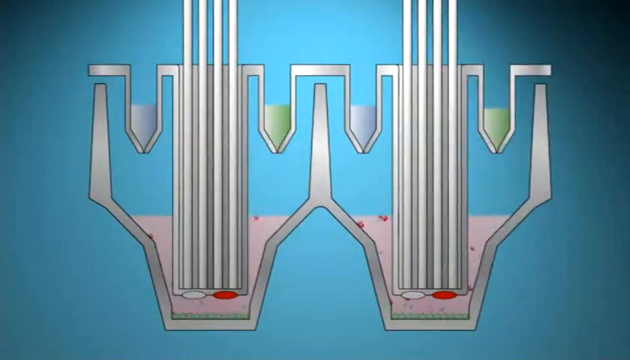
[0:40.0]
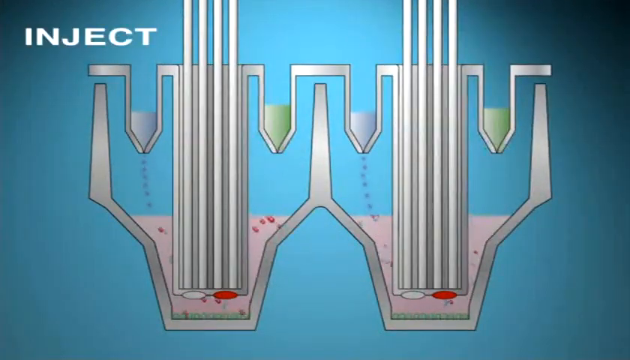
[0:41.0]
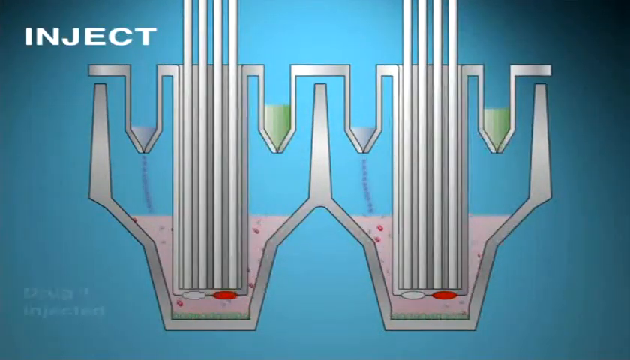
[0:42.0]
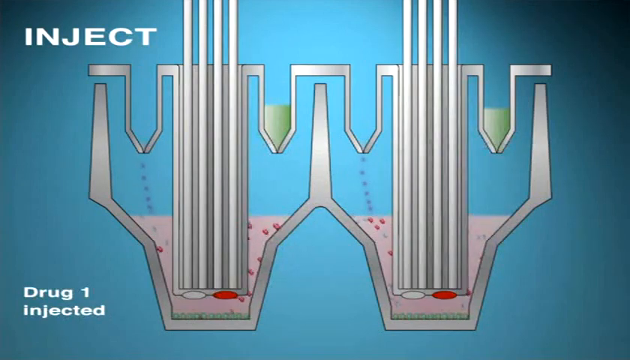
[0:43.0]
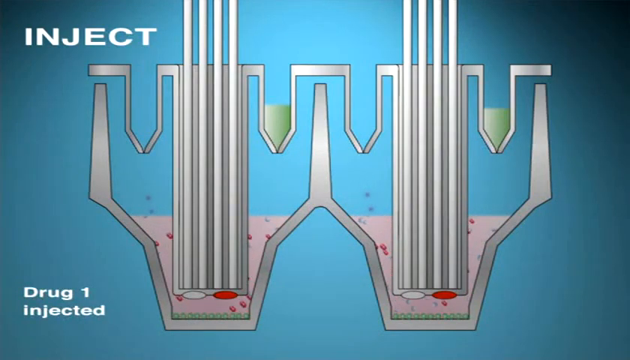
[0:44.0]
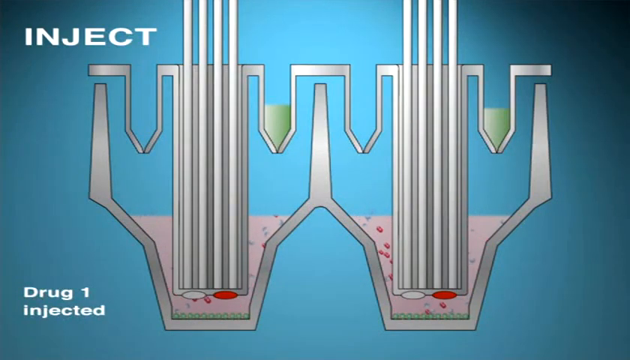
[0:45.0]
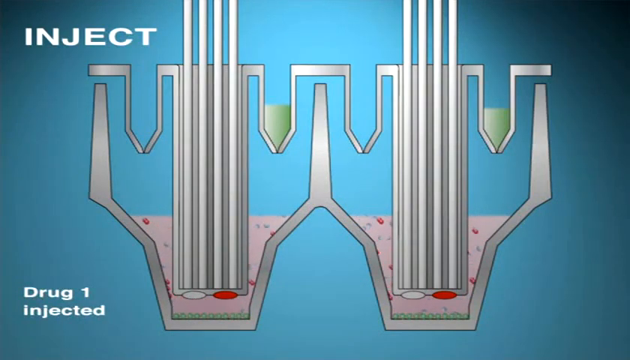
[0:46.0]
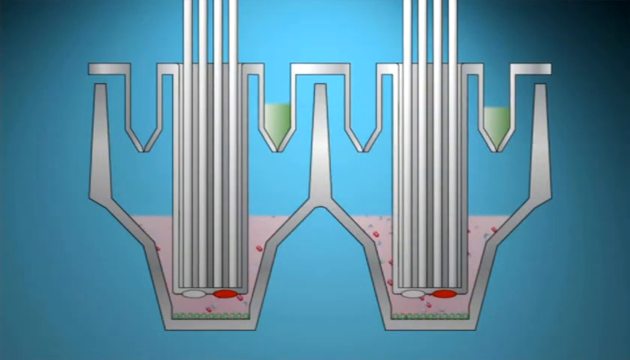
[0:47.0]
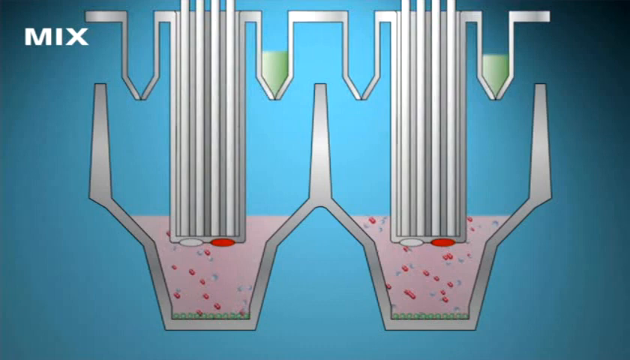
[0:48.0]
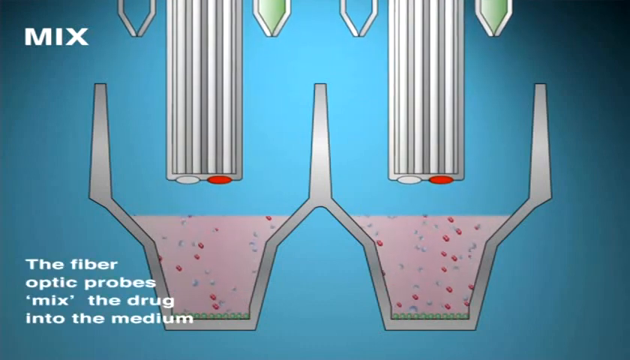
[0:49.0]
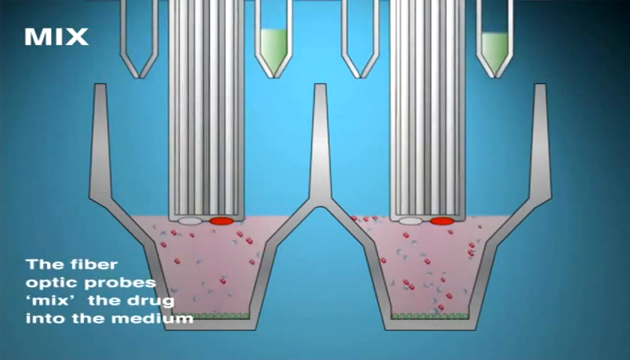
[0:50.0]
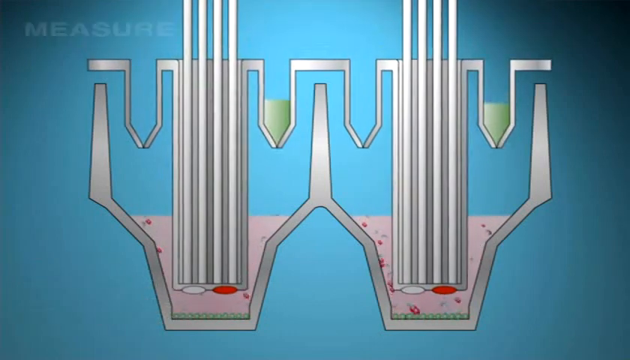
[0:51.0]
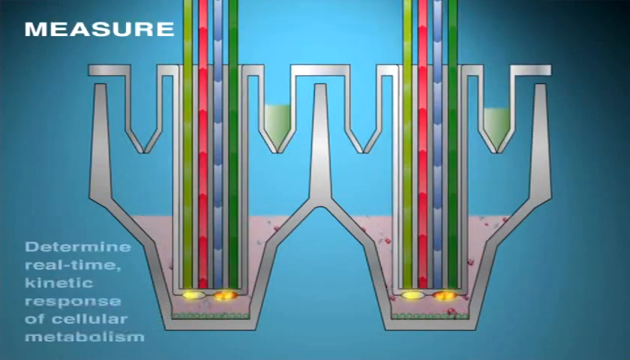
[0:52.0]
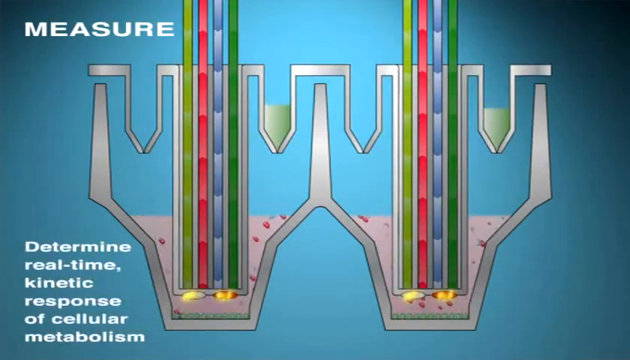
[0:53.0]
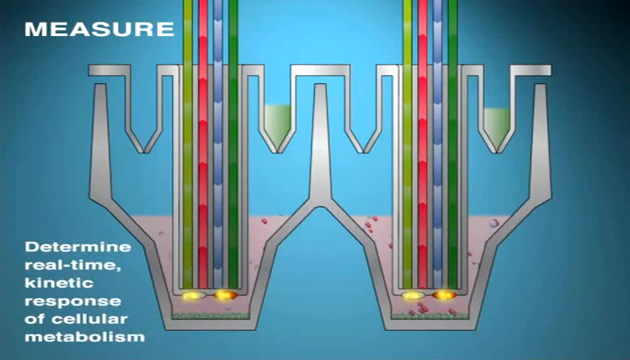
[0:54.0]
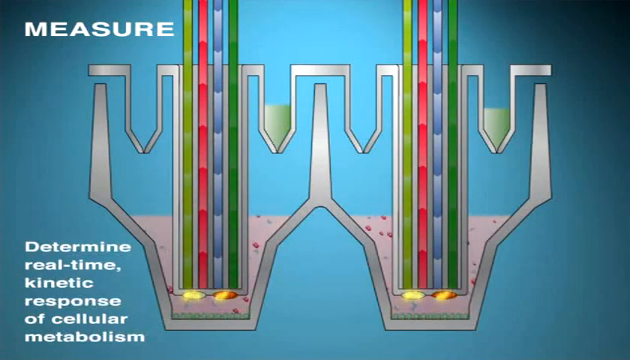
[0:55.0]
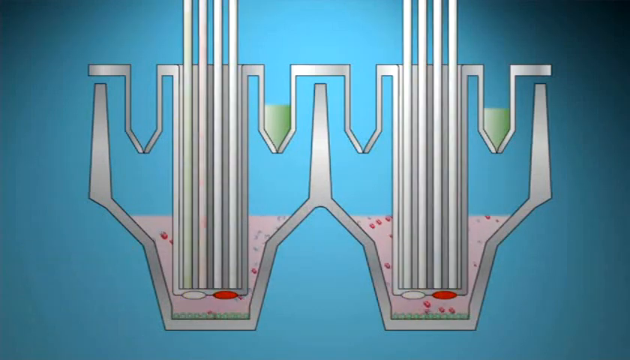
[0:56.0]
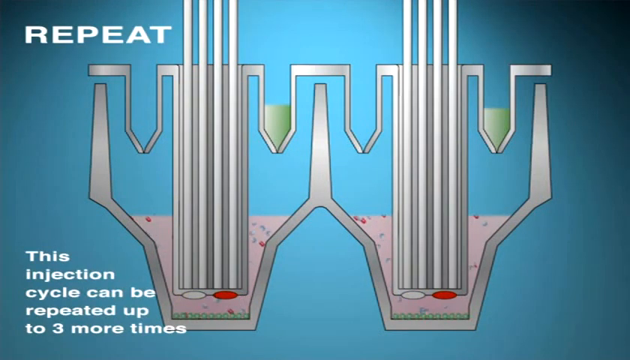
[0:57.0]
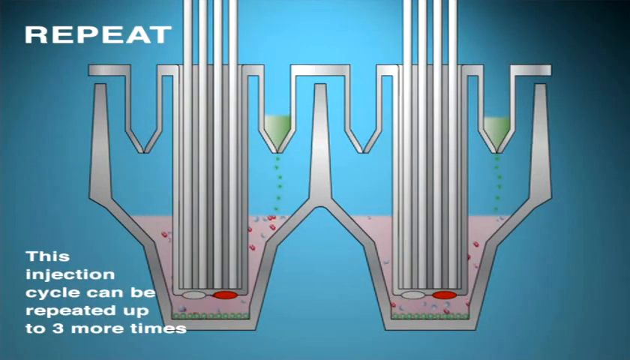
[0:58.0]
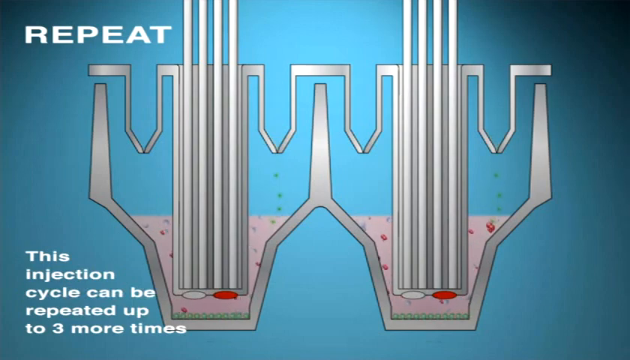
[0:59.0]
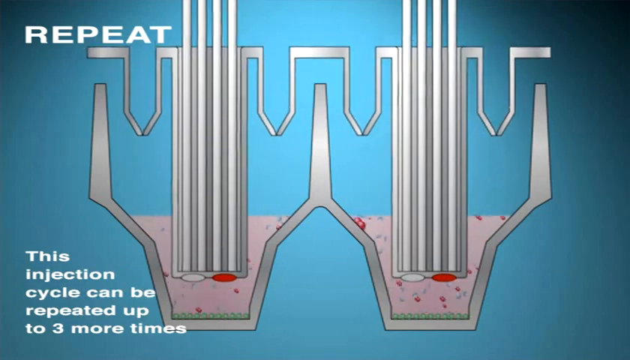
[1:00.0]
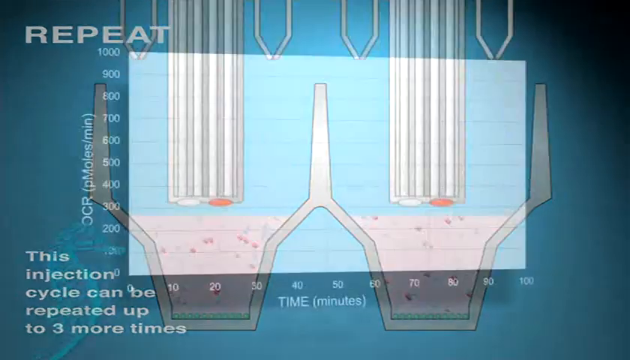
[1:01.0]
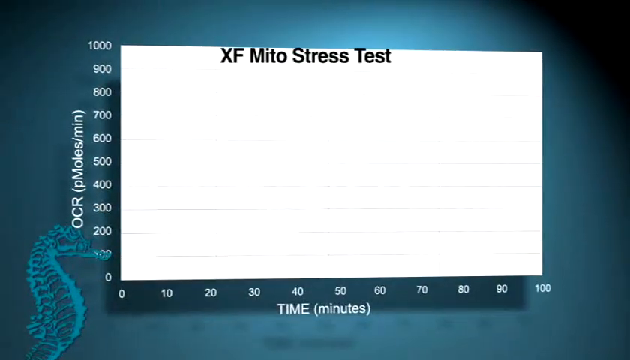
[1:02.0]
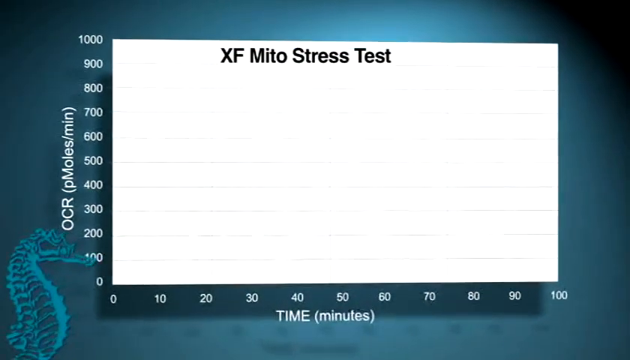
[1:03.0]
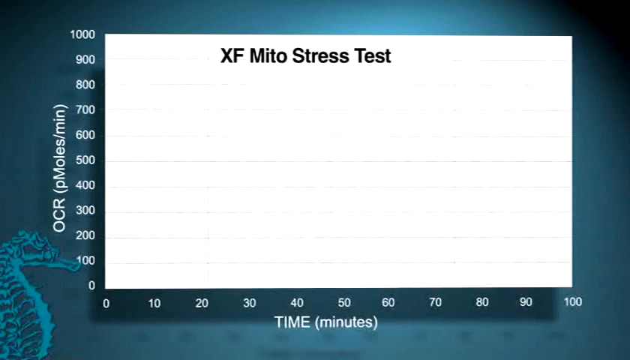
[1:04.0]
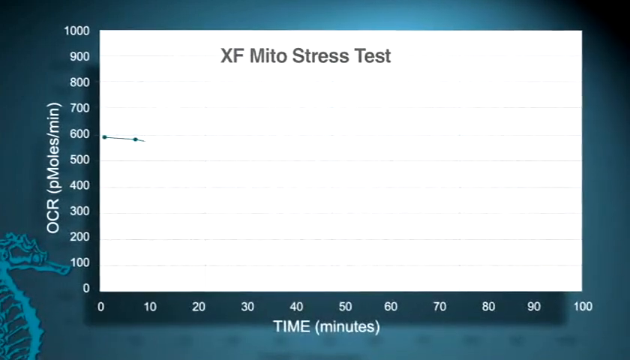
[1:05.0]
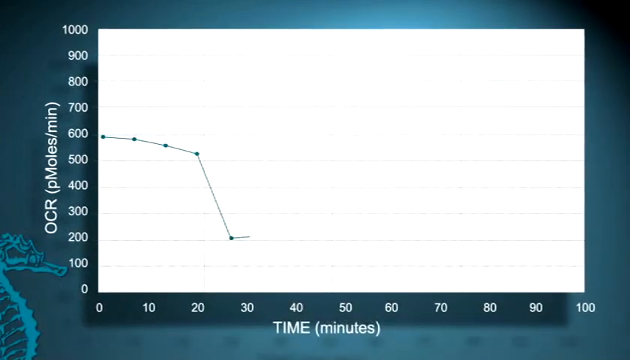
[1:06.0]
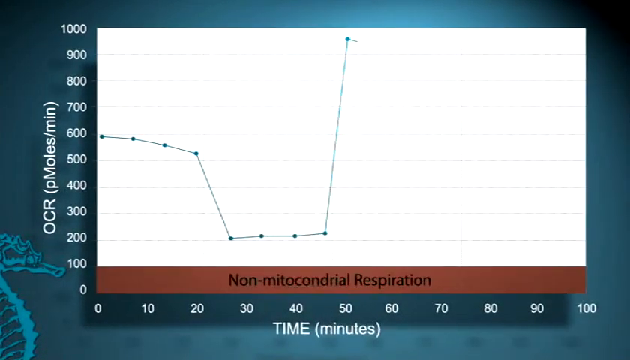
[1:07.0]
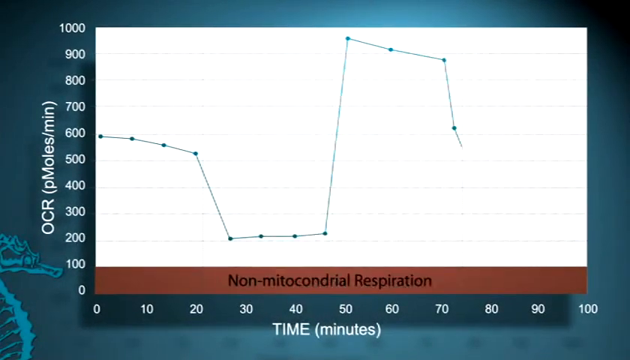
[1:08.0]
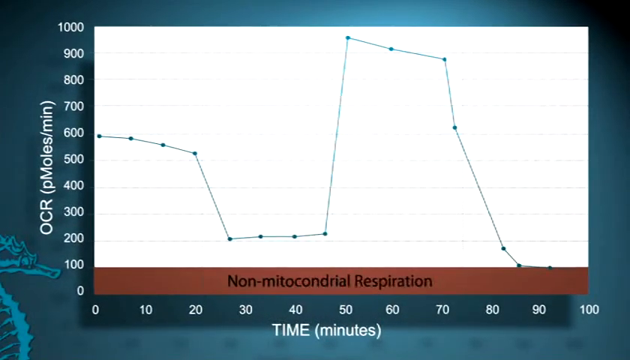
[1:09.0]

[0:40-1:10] A diagram on a light blue background shows two sets of what look like small test tubes. Each pair has one tube on the left with blue liquid and one on the right with green liquid, with four white tubes in the middle. They appear to be lowered into a vat of what looks like pink liquid with red particles. At the bottom of the four white bars there is a white oval at the bottom left and a red oval at the bottom right. White text suddenly appears at the top left reading "inject", and the blue liquid from the left test tube seems to sprinkle into the pink liquid, after which what look like green ovals form at the bottom. Text at the top left reads "mix", and the test tubes appear to be lifted out. Text at the bottom left reads "the fiber optic probes mix the drug into the medium". The four white tubes down the middle of each pair move up and down and turn green, red, blue and green, and white text reads "determine real-time kinetic response of cellular metabolism". The tubes turn white again, the green test tube seems to sprinkle its contents into the pink liquid, and the four white tubes go back up. The video then transitions to a screen with a graph that is being zoomed in, with a blue background and a seahorse at the bottom left. The y-axis reads "OCR, P moles per minute", the x-axis reads "time, minutes", and the title reads "XF mito stress tests". A green line graph starts at 600 on the y-axis, goes to the right, drops to 200, and goes straight back up to 1000. Text at the bottom of the graph reads "non-mitochondrial respiration".